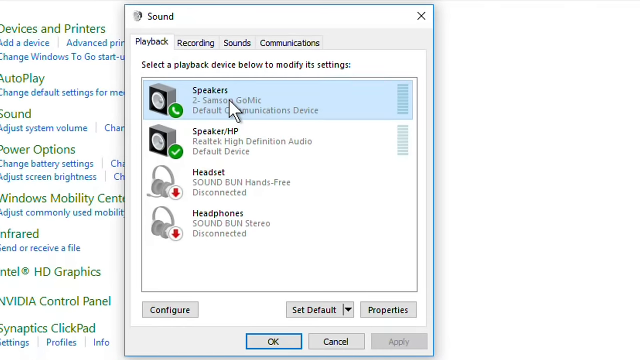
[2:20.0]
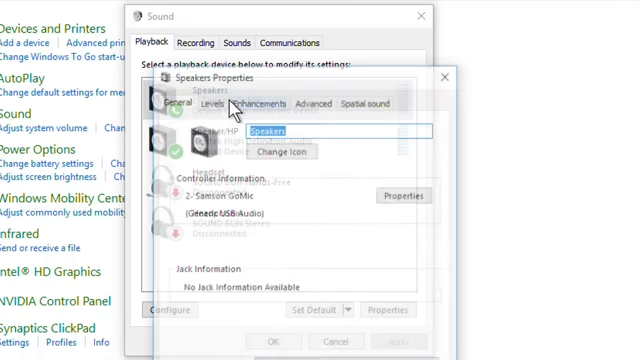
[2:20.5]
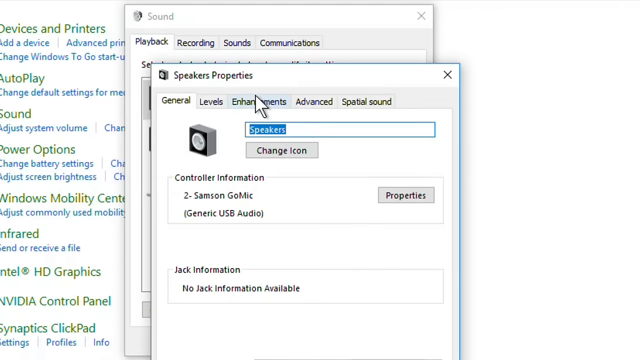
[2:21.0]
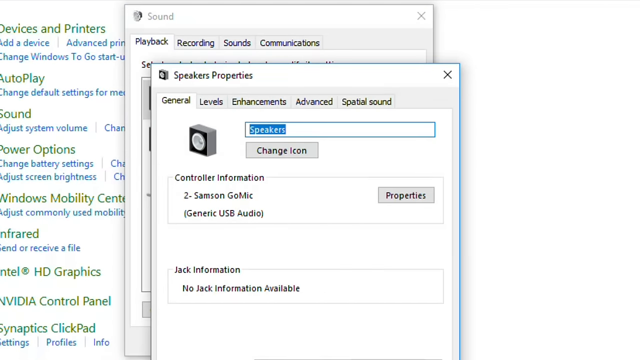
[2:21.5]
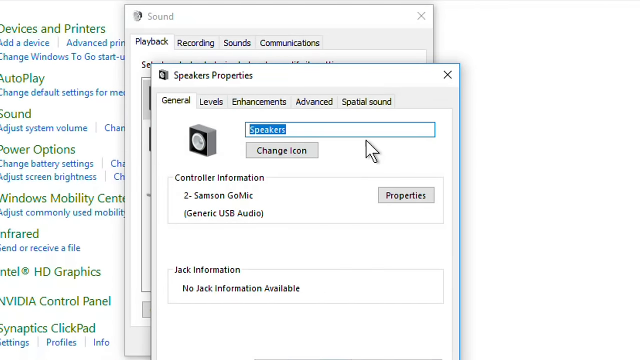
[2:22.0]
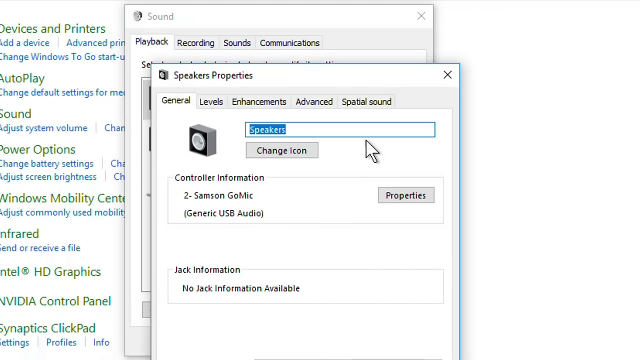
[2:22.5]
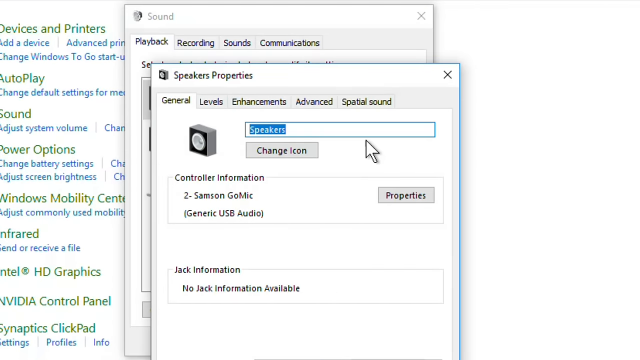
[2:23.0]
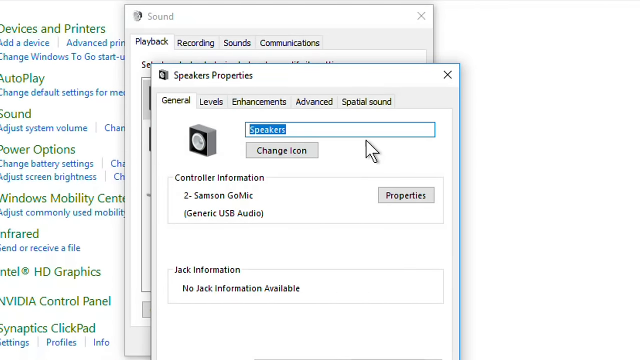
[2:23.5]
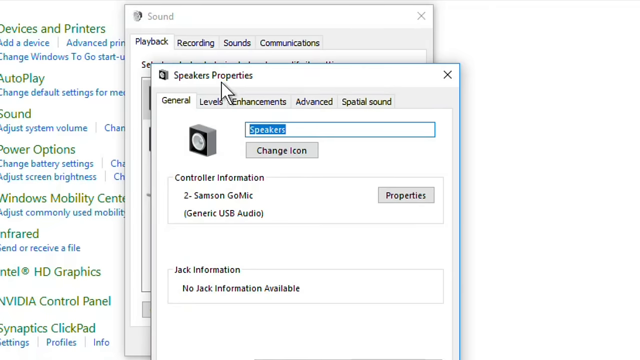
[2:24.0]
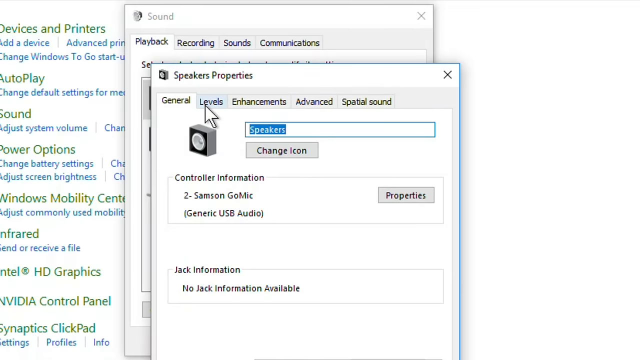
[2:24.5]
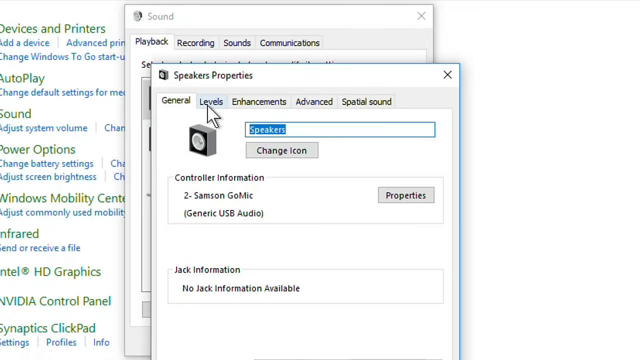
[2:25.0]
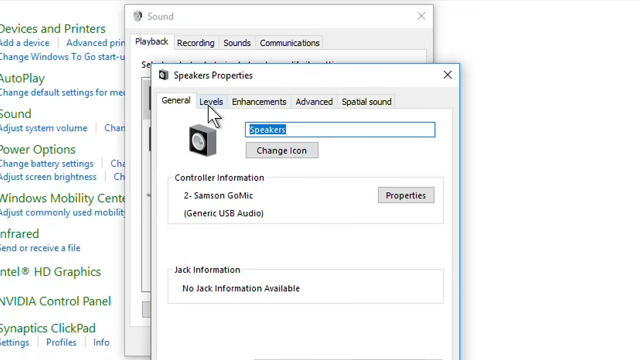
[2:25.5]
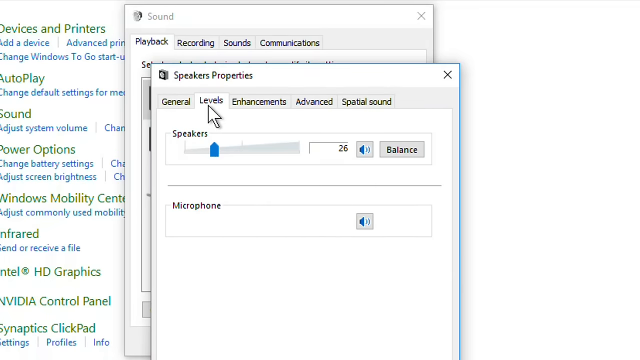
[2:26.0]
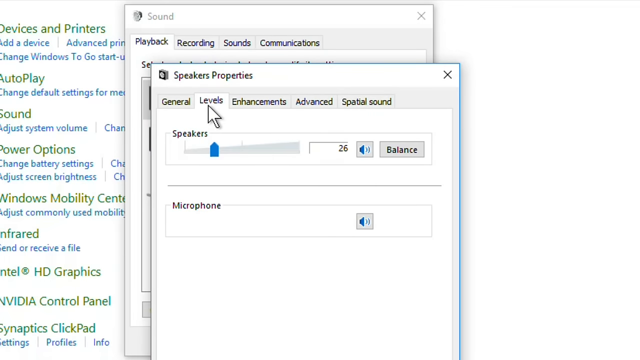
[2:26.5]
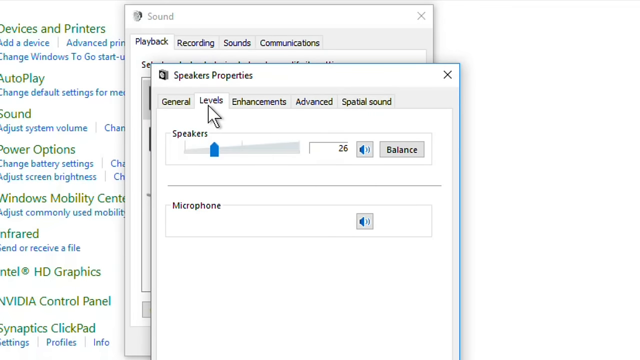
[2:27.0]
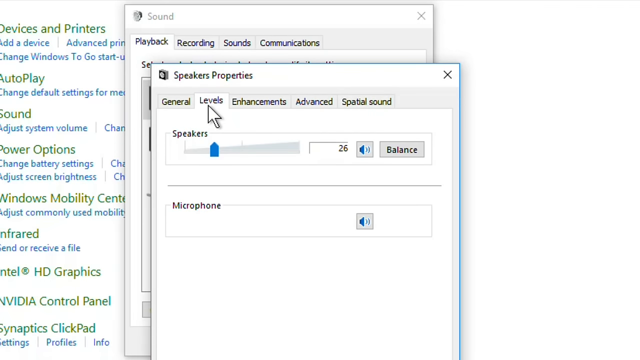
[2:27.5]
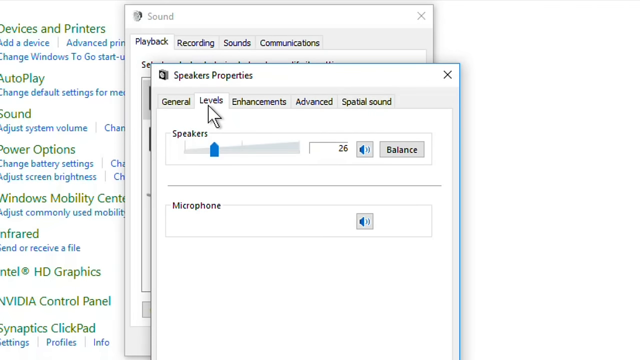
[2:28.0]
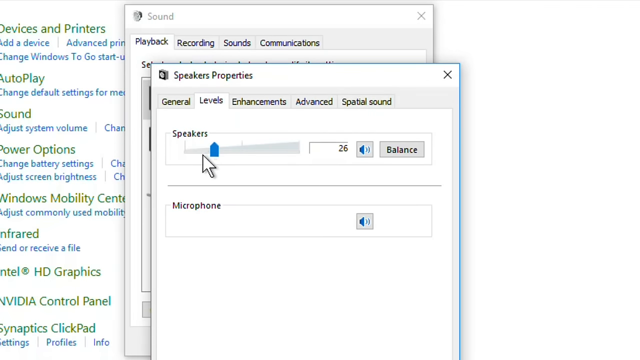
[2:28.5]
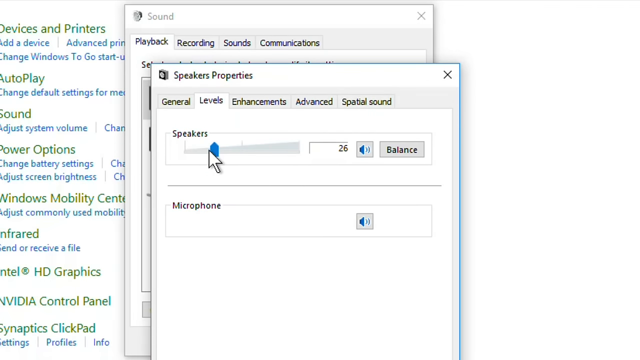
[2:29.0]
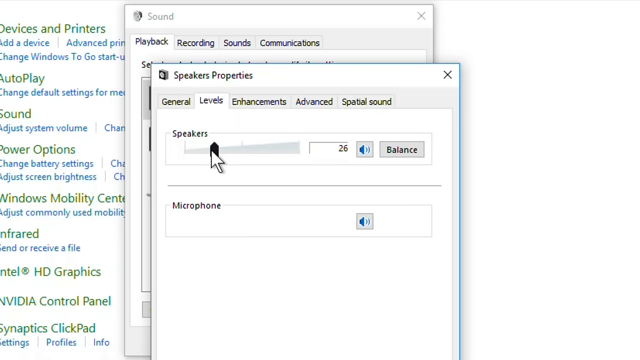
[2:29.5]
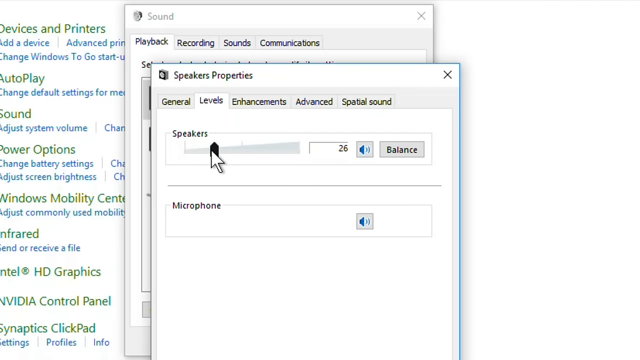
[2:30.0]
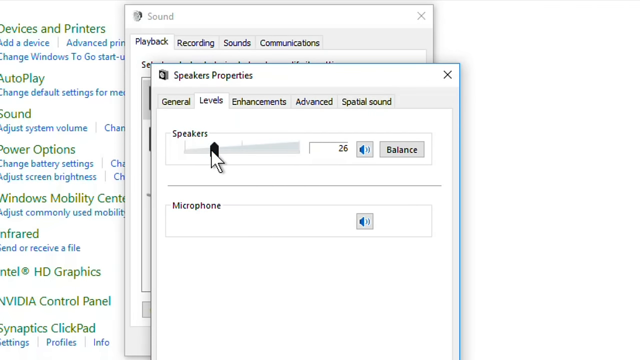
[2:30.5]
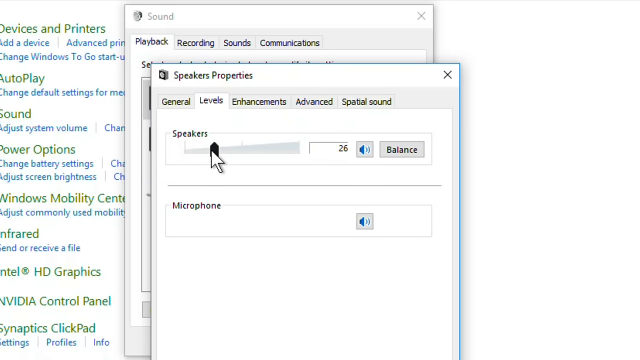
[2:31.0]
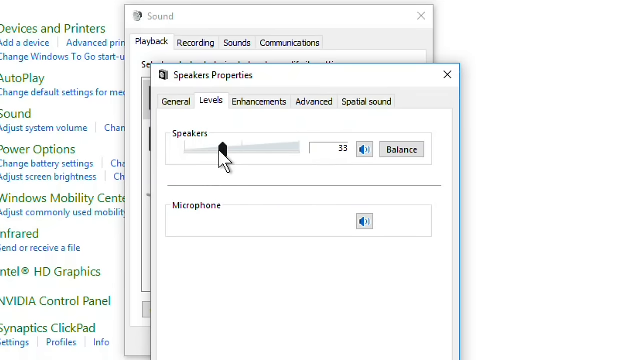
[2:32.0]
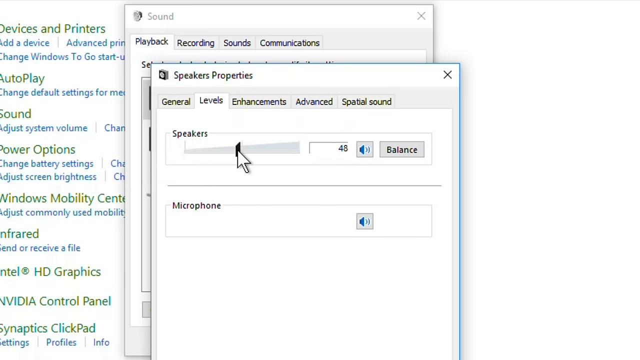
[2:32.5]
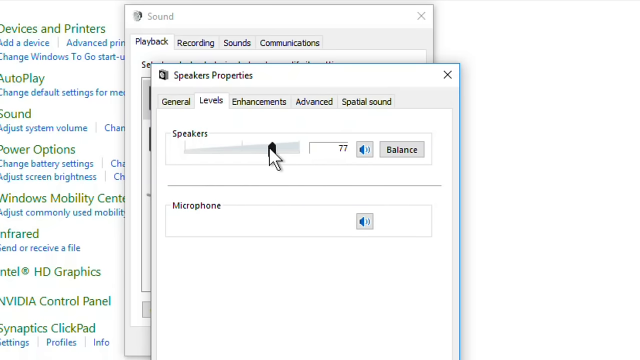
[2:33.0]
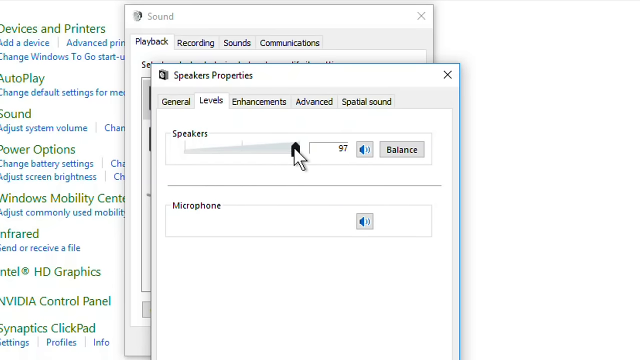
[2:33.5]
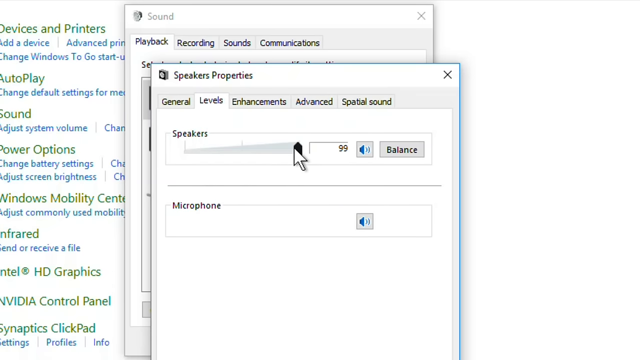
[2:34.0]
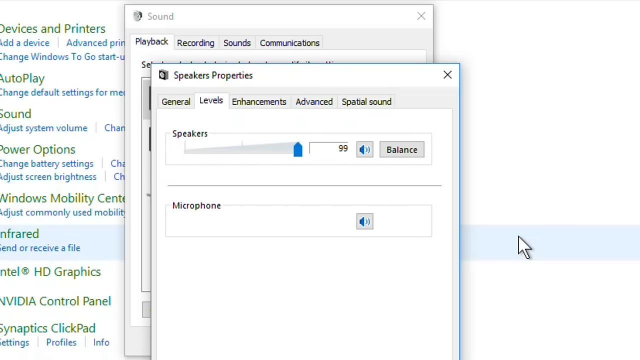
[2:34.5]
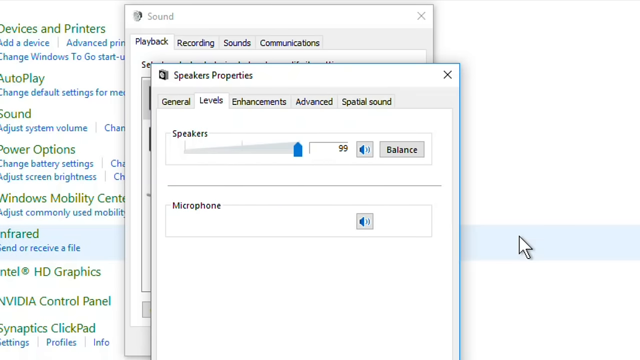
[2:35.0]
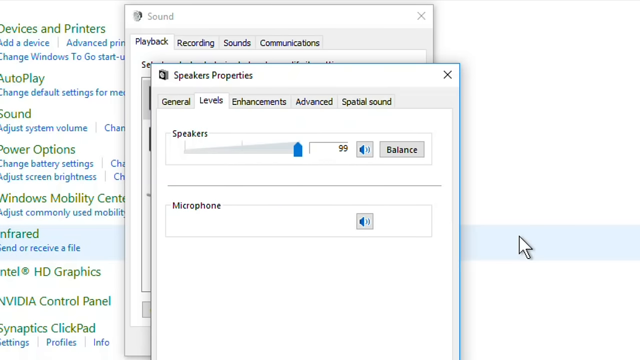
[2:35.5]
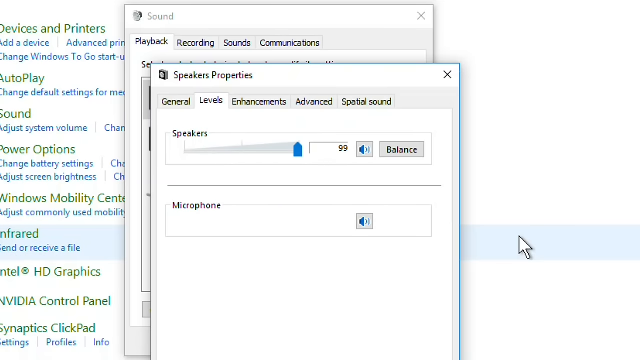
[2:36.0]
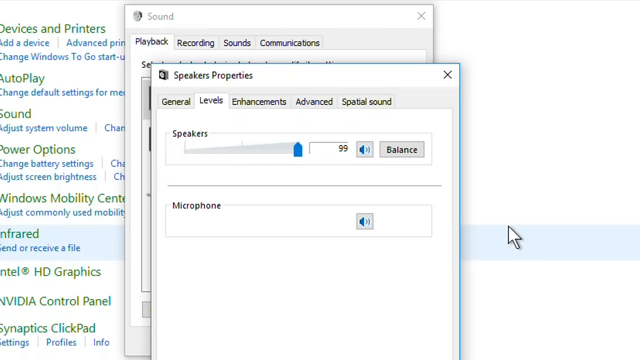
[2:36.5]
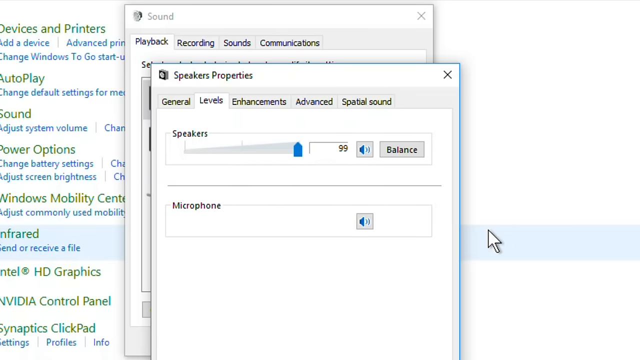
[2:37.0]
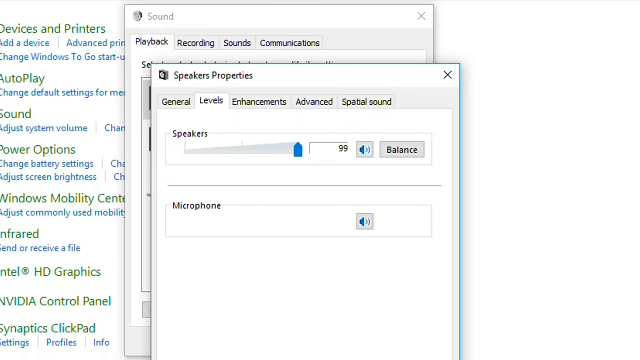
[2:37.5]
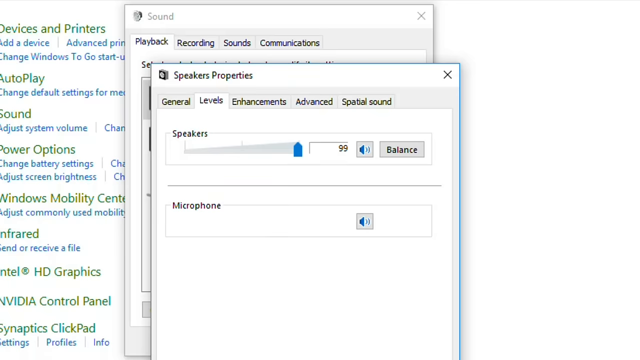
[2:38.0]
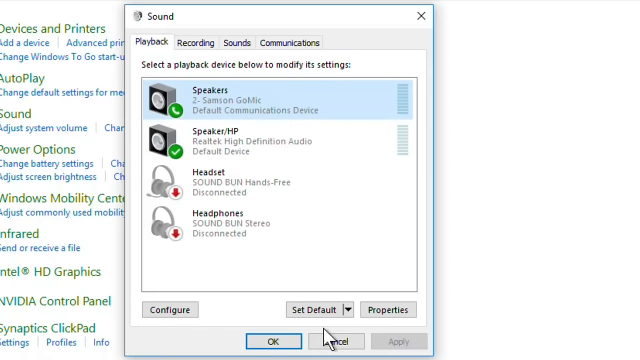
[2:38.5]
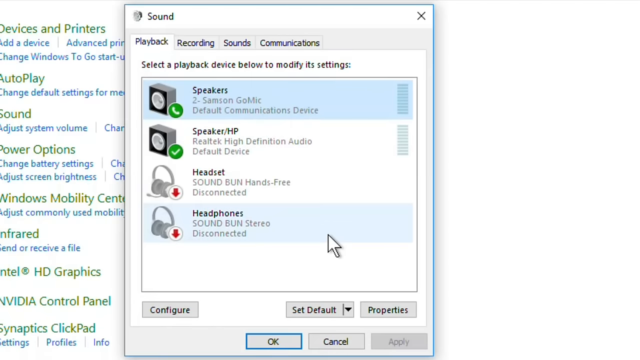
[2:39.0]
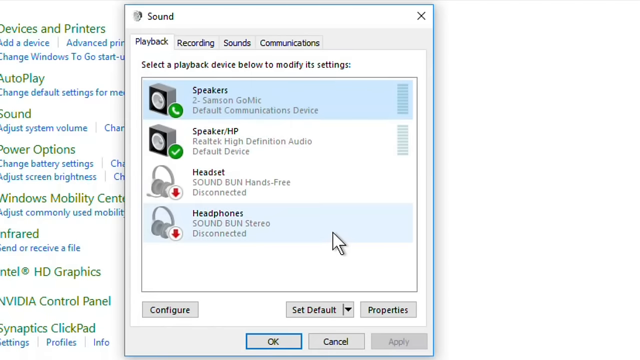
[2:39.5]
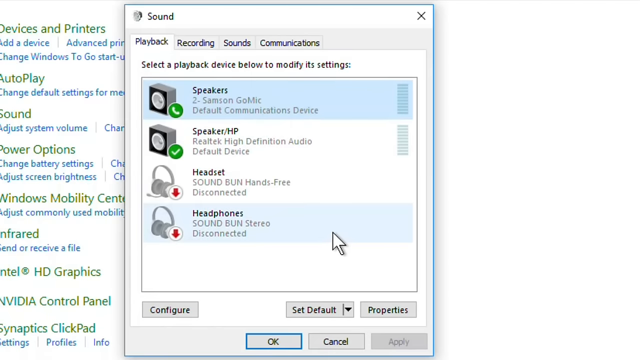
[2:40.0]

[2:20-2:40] The arrow cursor clicks "Speakers", and a smaller window of the same design opens, slightly overlapping the Sound window but lower and to the right, with "Speakers Properties" in its upper left. The cursor makes a big, somewhat jumpy circle. The top row of choices includes General, Levels and a few others; General is selected, but the cursor clicks Levels and everything below changes. Among the options below is one that says Speakers, with a sliding arrow that moves right or left. The arrow cursor grabs it and pulls it to the right, and the box to the right showing the number changes from 26 to 99. The cursor hovers off to the right outside that window, then jumps to the lower left and presumably clicks Close, quickly and off screen, as the window disappears. The Sound window is now in the center of the image, with Speakers as its top choice, and behind it is the larger Control Panel window, slightly zoomed in.